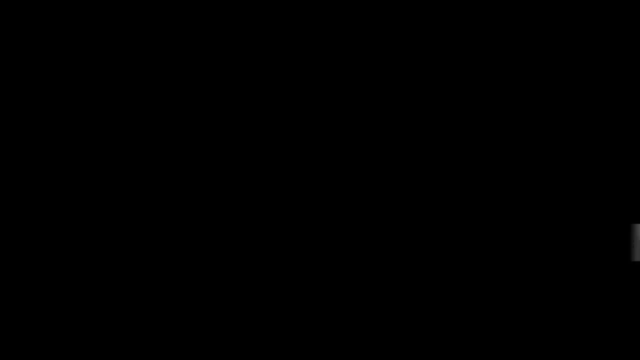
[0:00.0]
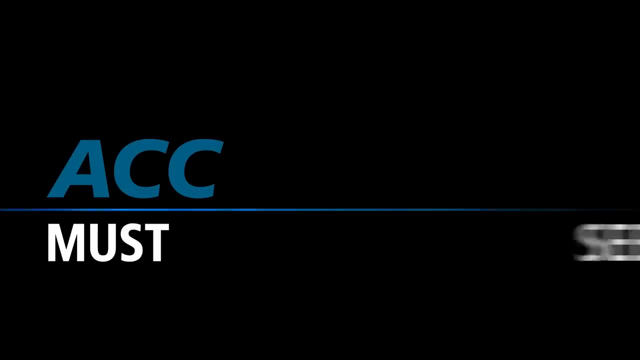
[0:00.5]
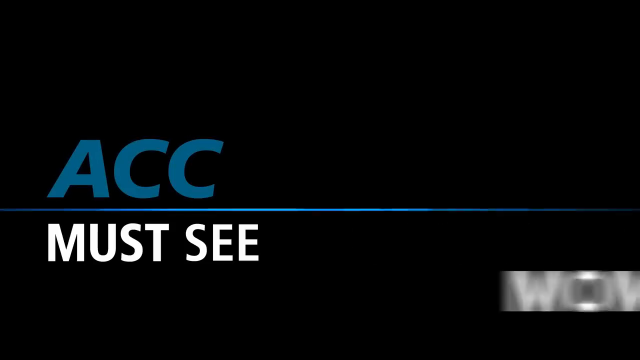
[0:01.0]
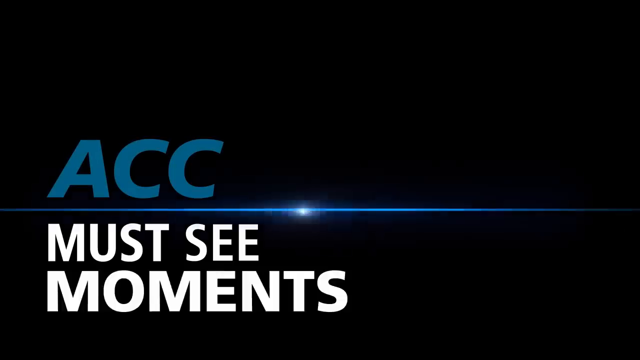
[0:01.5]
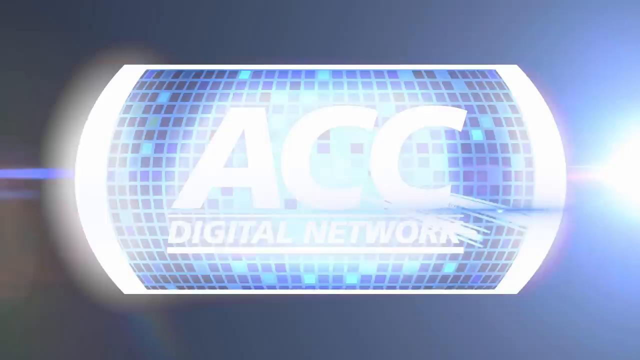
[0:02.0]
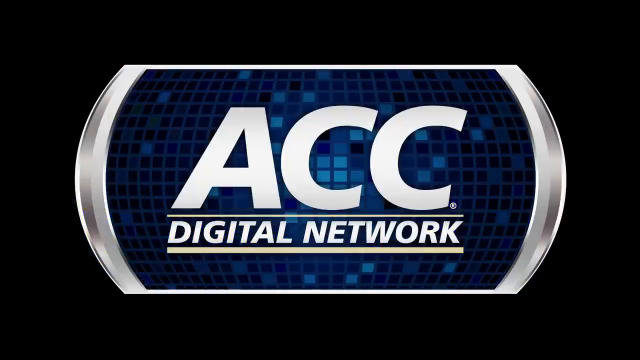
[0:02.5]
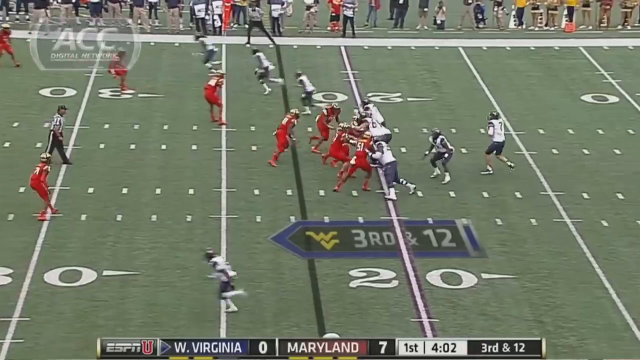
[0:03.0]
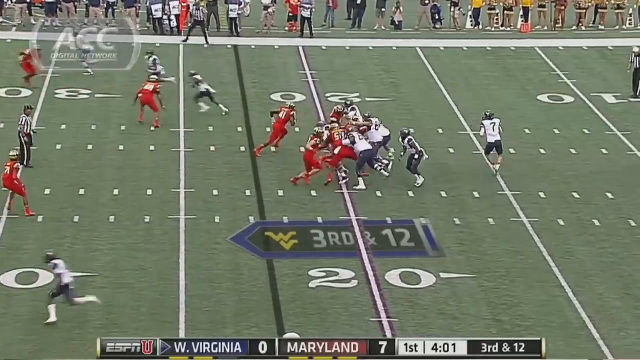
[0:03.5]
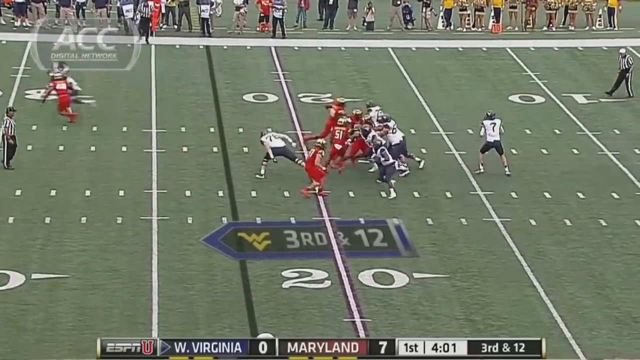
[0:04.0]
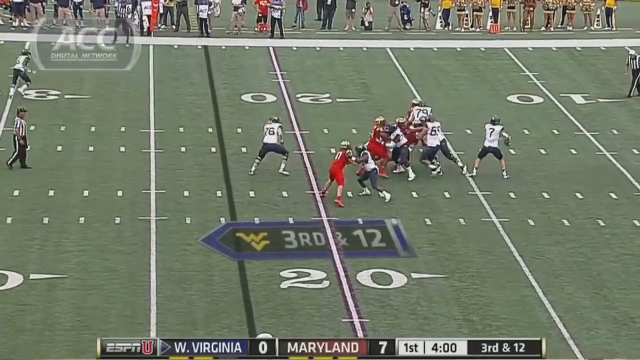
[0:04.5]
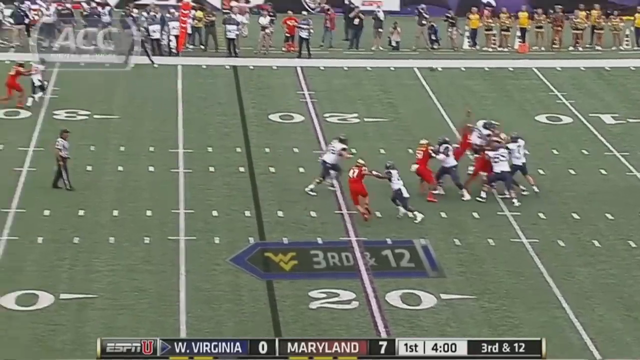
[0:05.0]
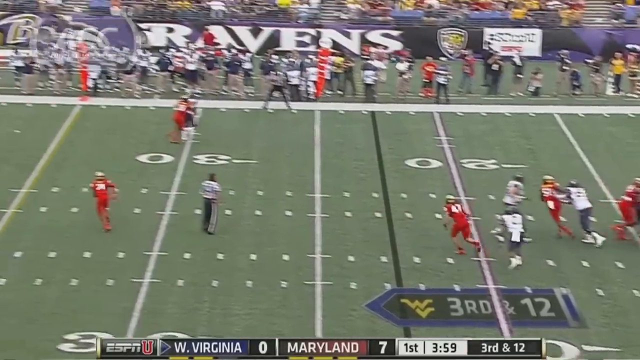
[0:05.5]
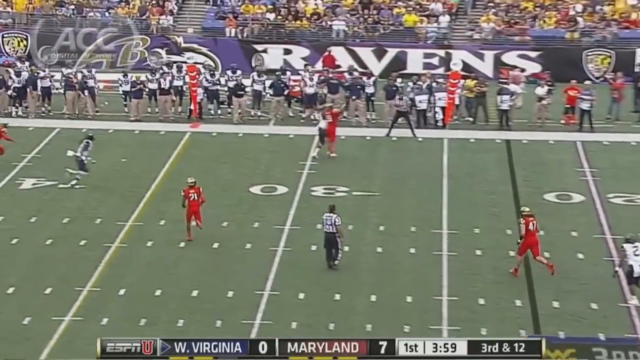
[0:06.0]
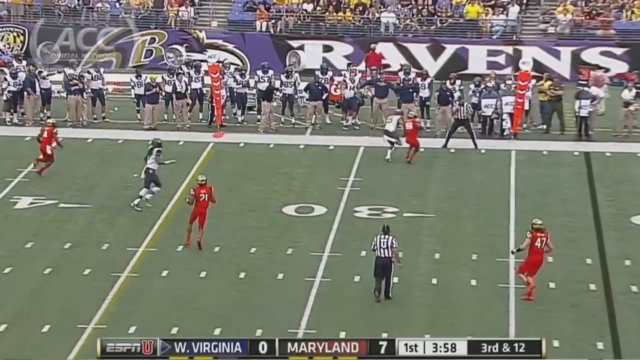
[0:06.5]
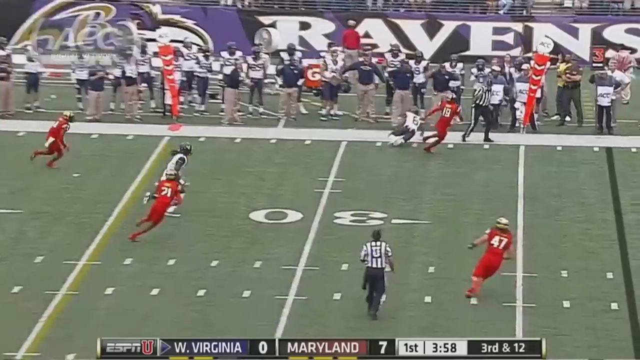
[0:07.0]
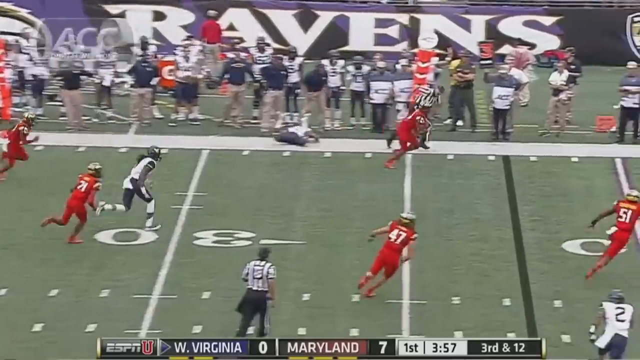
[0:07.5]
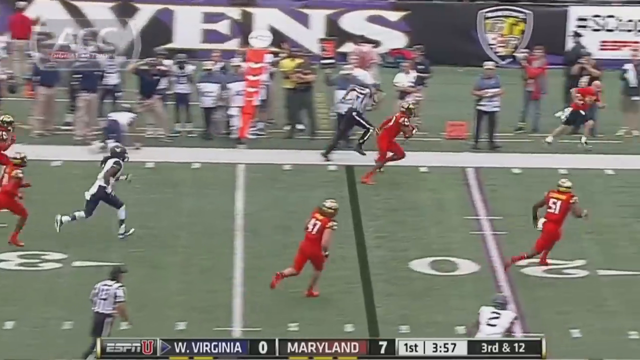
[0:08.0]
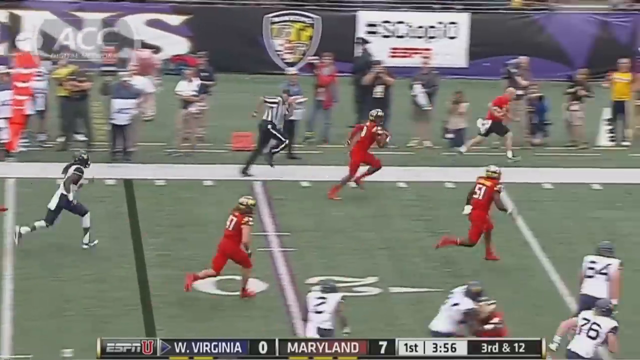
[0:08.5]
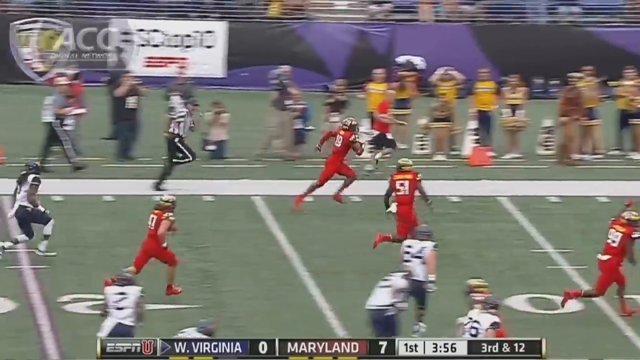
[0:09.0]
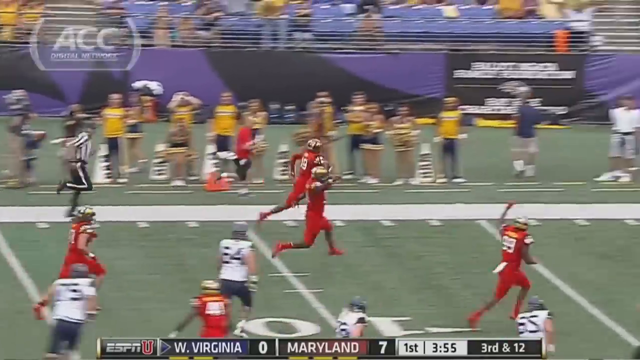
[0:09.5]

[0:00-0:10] An ACC Digital Network video shows a football game between Maryland and West Virginia in the first quarter, with four minutes left, on third and 12. Maryland is in red, and West Virginia is in white and blue. A Ravens banner is in the back. There are lots of fans and lots of people on the sidelines. Number 19 makes a touchdown, and the players are excited about it. On ESPN, the score shows Maryland with seven and West Virginia with zero. The setting is a football field.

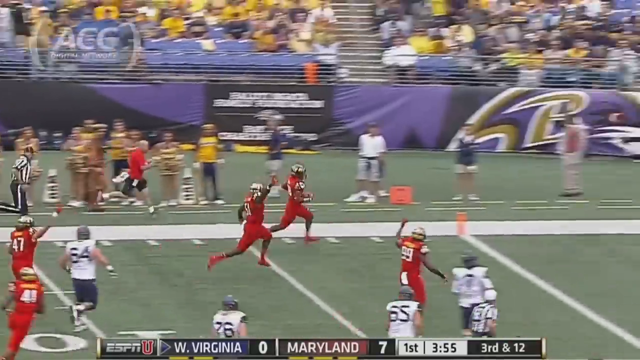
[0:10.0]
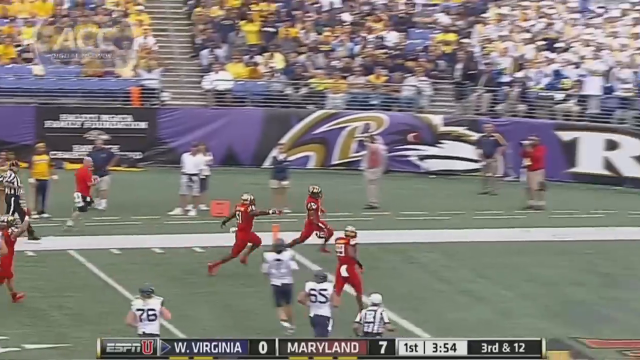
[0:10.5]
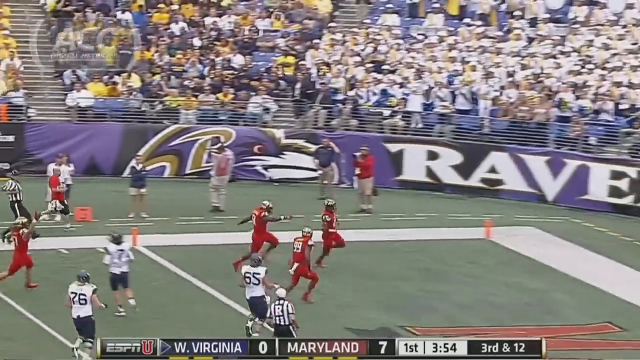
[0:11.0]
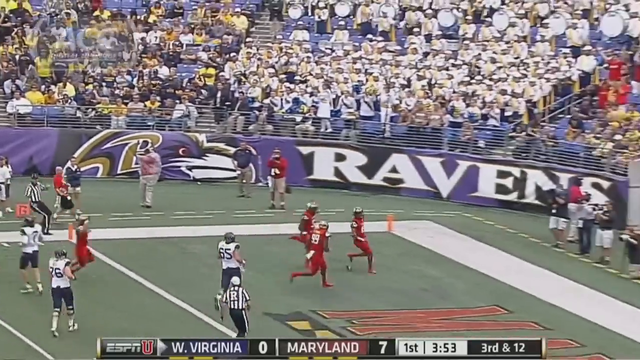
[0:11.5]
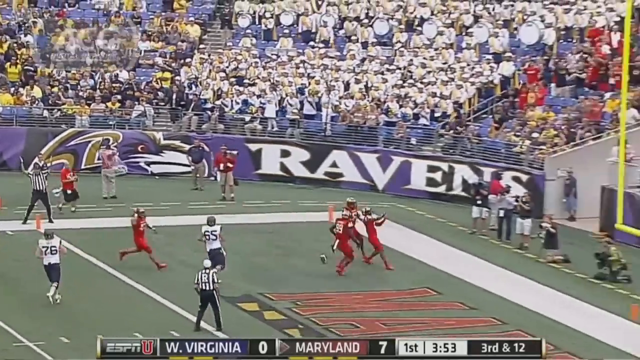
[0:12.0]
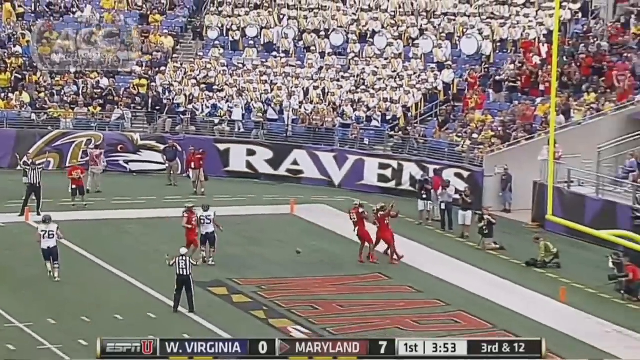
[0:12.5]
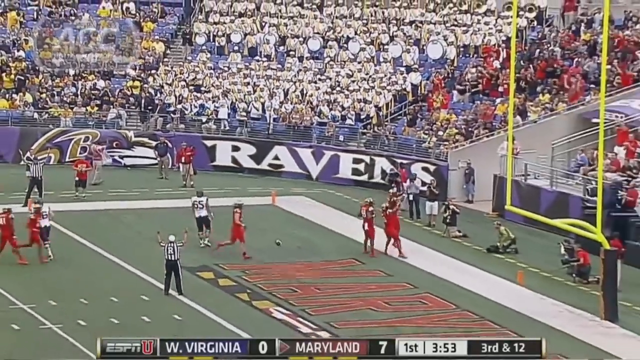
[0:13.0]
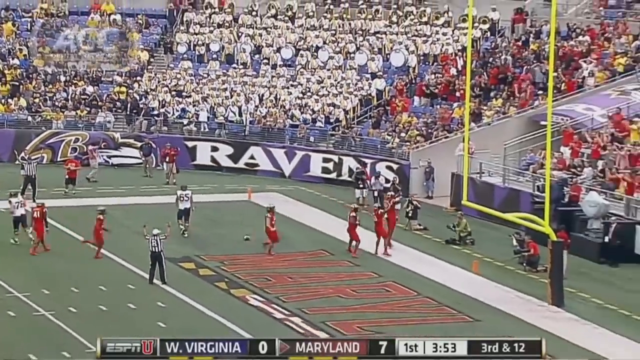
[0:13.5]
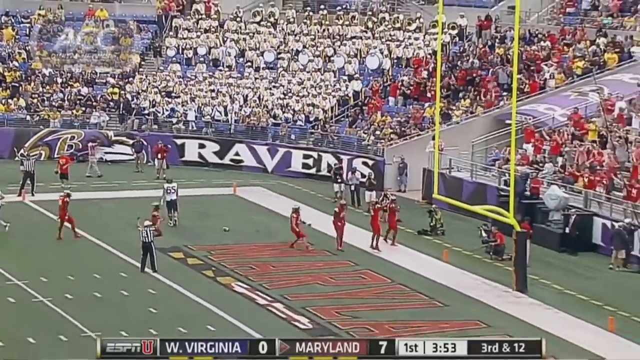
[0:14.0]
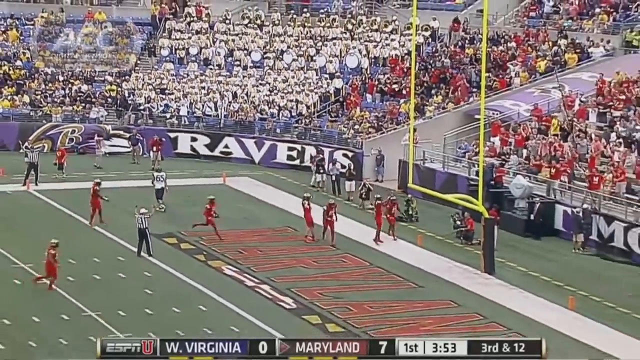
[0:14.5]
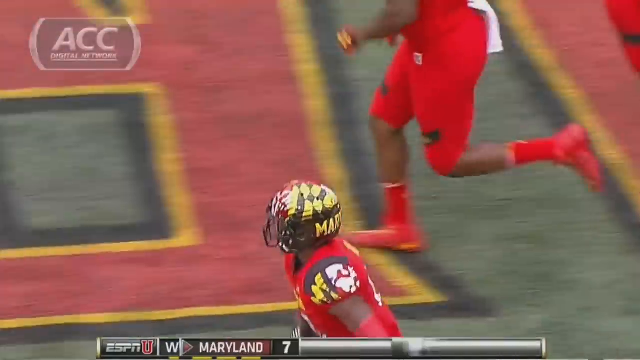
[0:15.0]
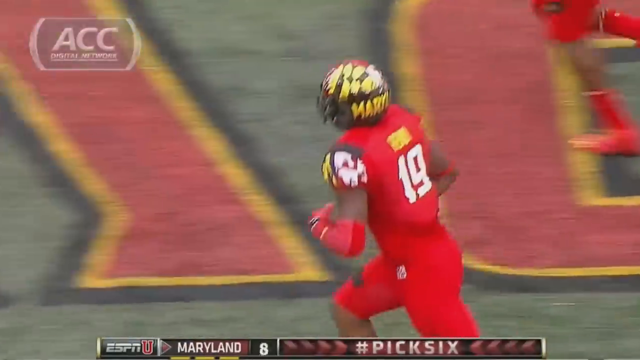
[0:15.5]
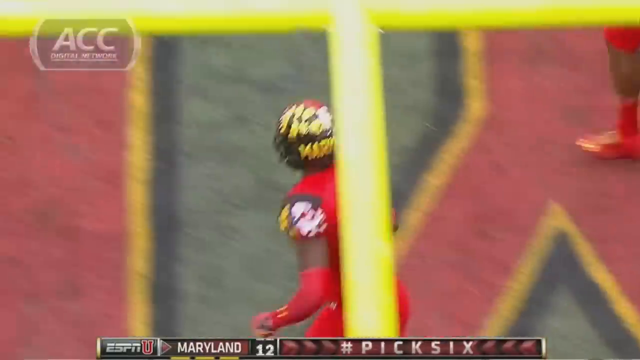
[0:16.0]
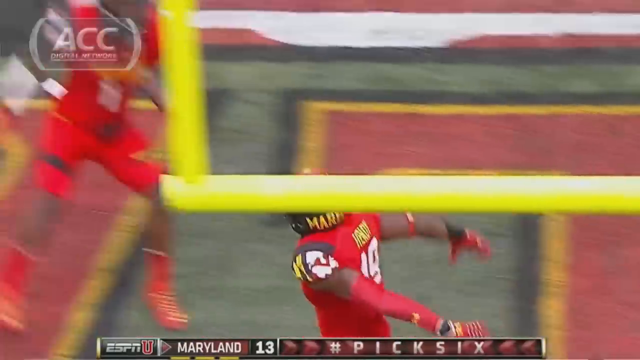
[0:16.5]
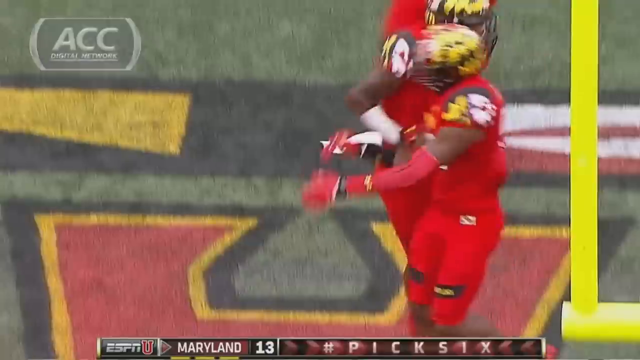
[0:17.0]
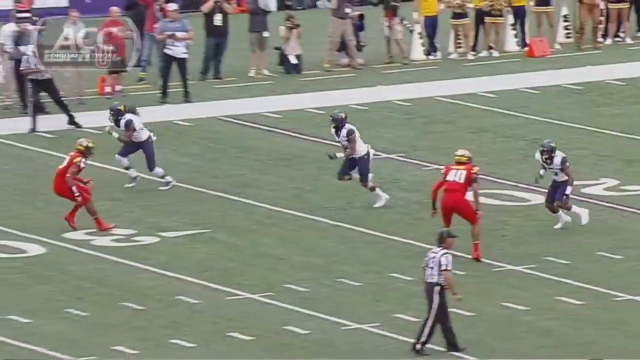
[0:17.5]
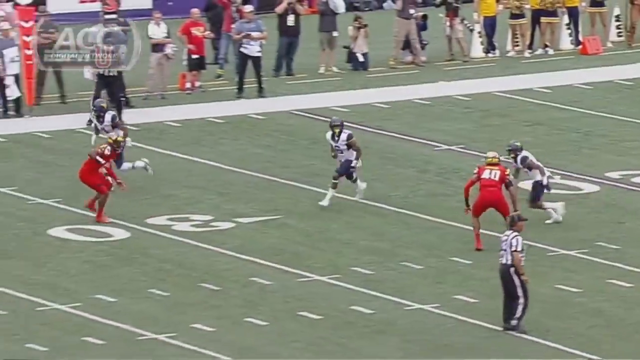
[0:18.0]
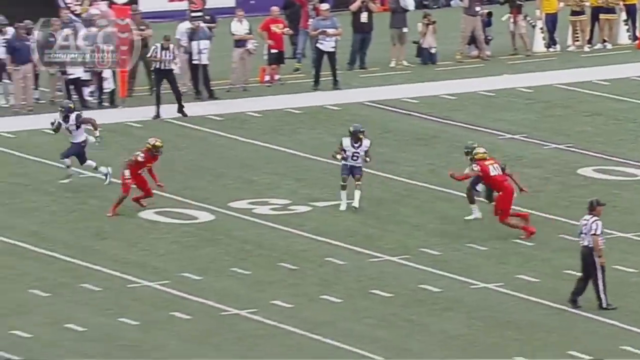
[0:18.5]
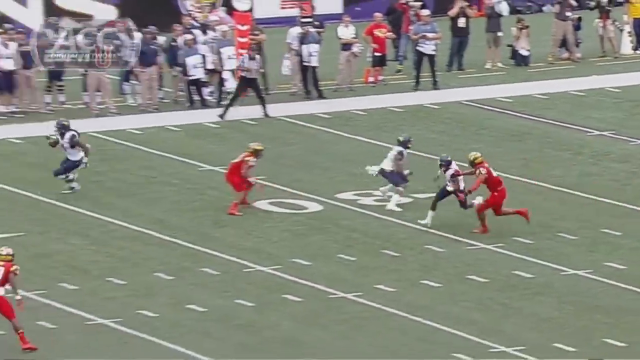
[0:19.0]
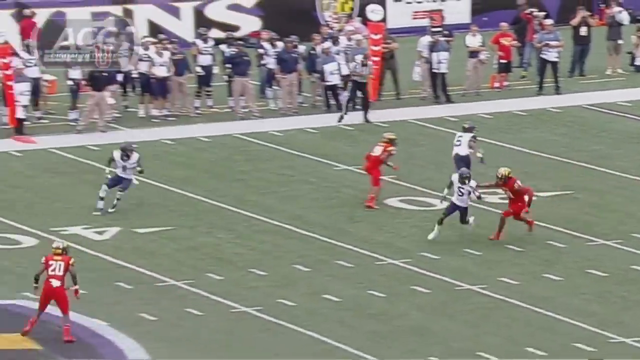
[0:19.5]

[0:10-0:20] The same football team is at the Ravens Stadium, making a touchdown on a pick six after catching the ball at the 30-yard line. Maryland scores, and the players are excited. Number 19 is the one who makes the touchdown. A bunch of fans are there; they do not look dressed in red but appear to be in yellow. It is still the ACC network. A red band is visible, with red on the other side, only barely showing a little bit of them.